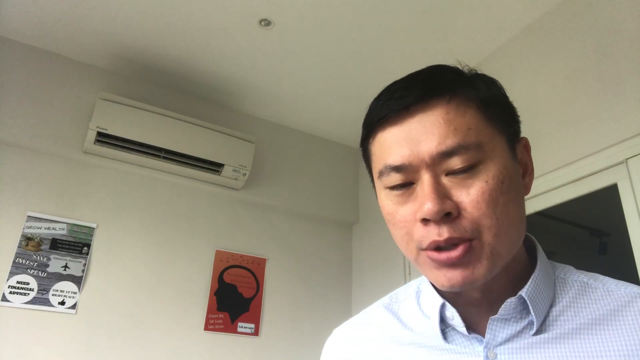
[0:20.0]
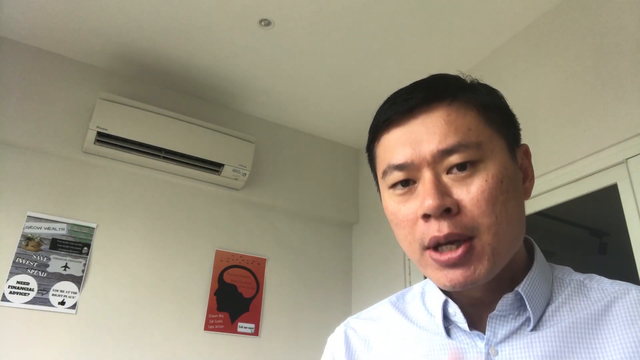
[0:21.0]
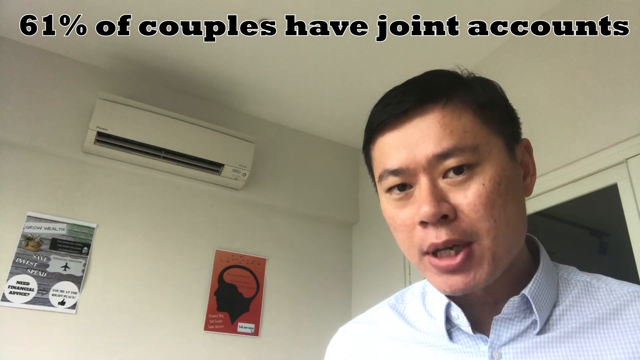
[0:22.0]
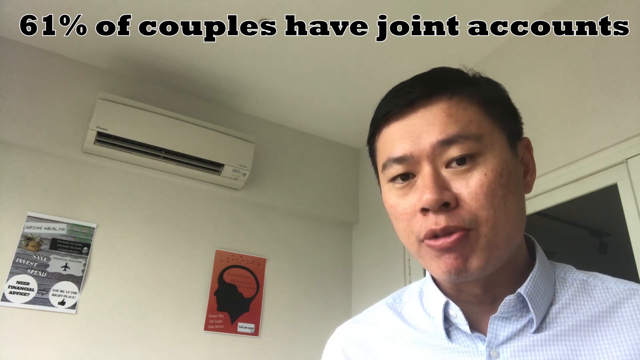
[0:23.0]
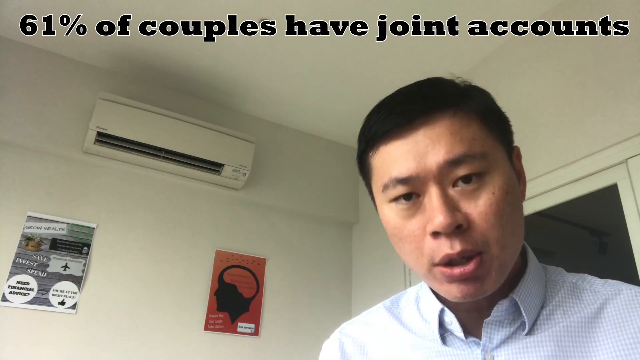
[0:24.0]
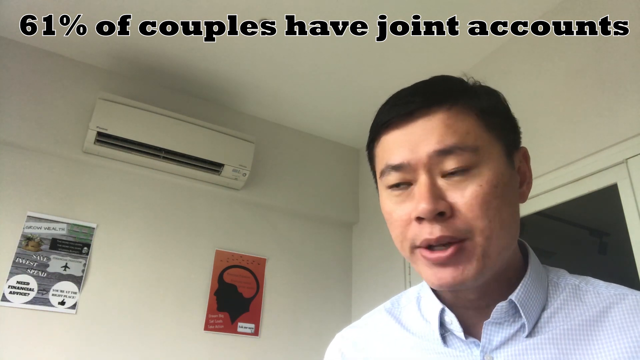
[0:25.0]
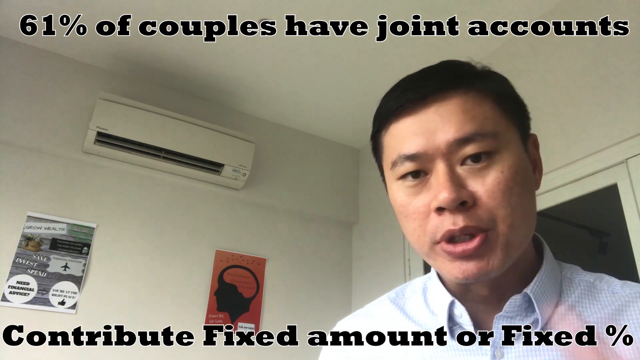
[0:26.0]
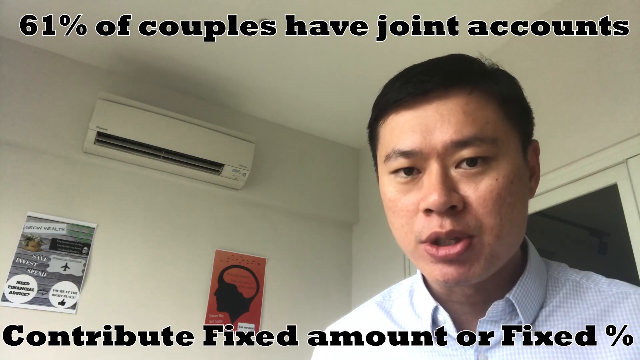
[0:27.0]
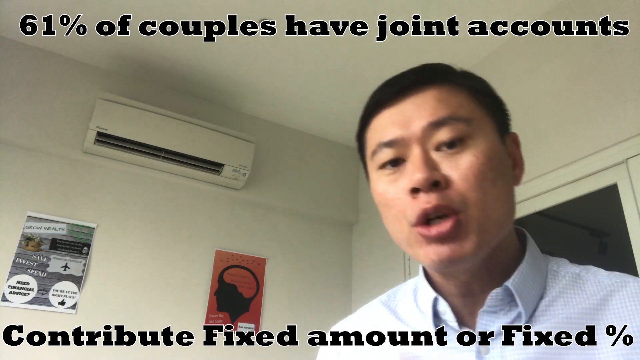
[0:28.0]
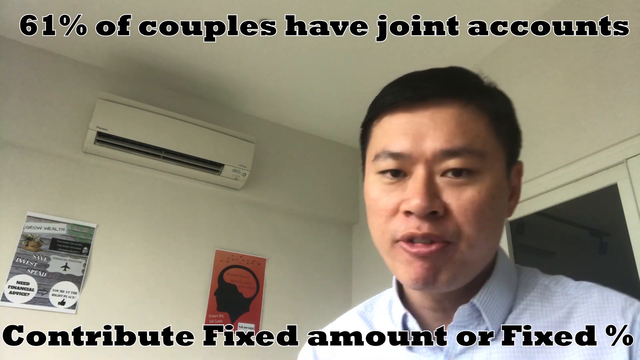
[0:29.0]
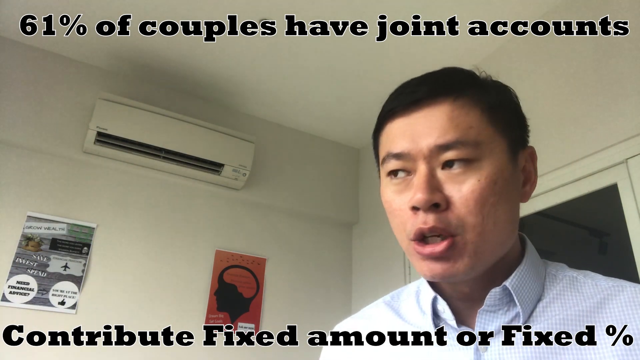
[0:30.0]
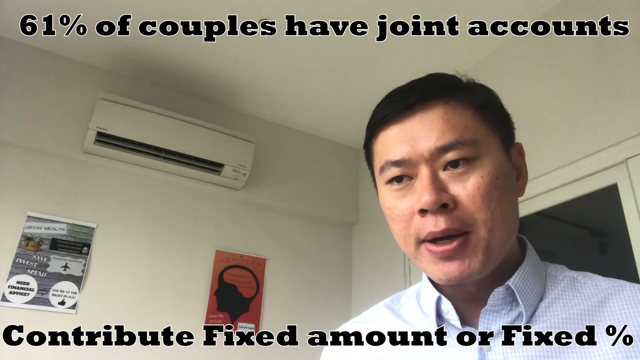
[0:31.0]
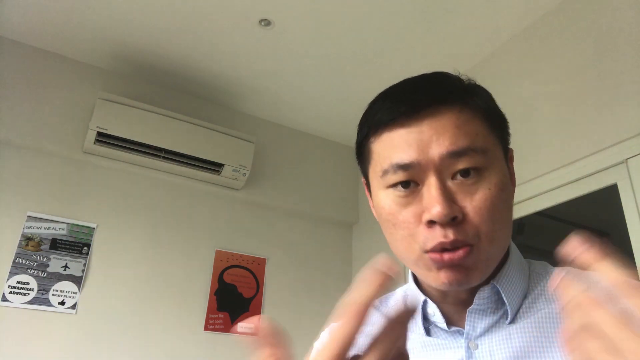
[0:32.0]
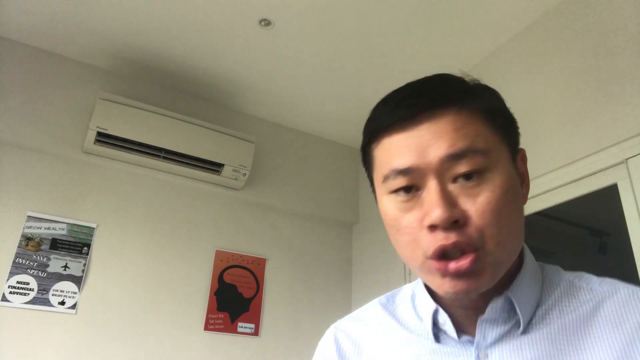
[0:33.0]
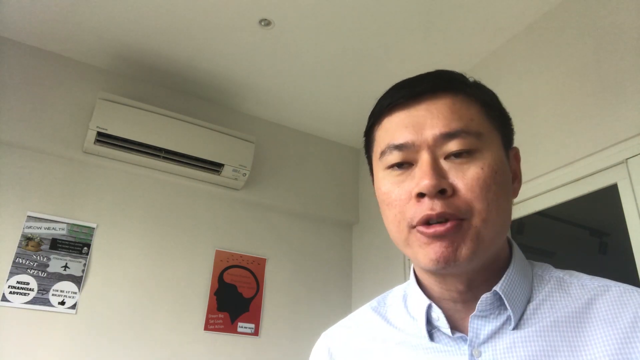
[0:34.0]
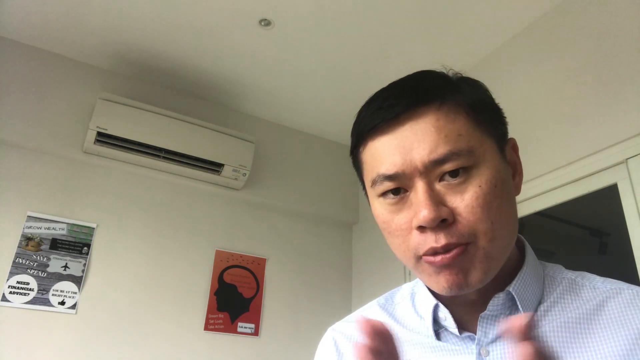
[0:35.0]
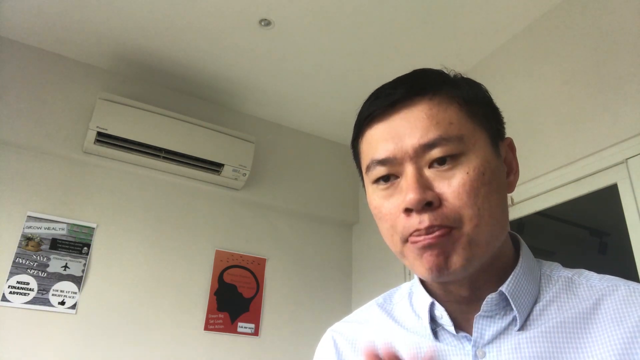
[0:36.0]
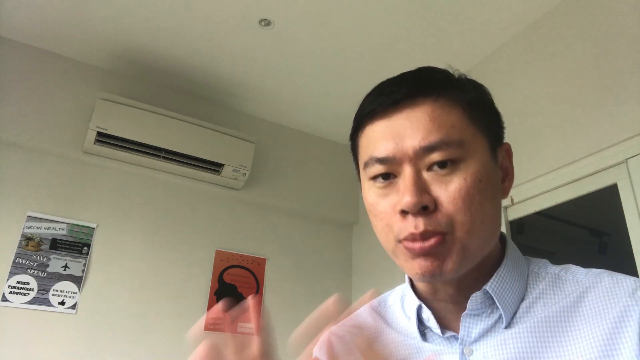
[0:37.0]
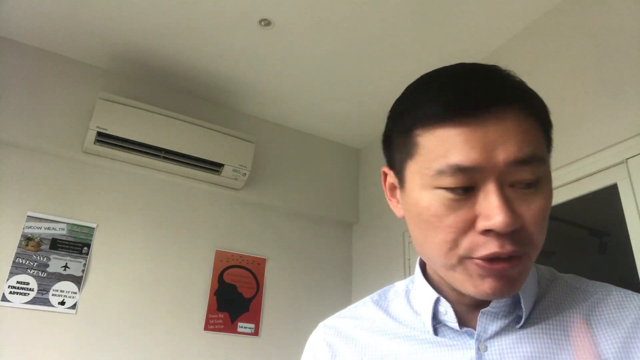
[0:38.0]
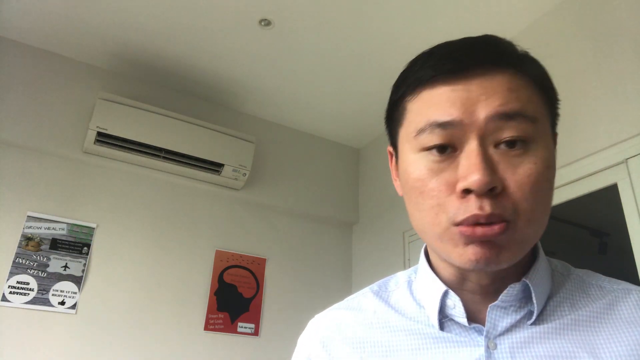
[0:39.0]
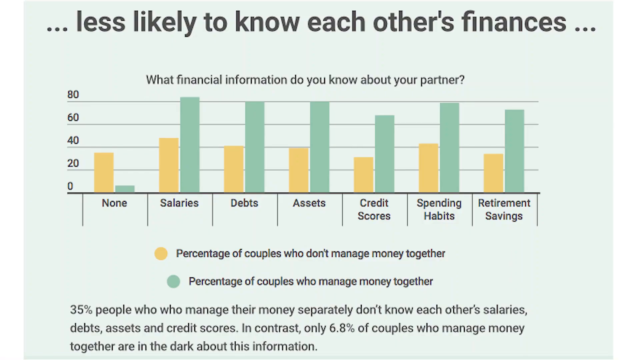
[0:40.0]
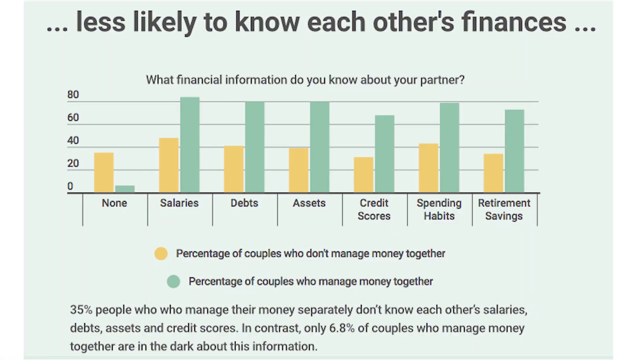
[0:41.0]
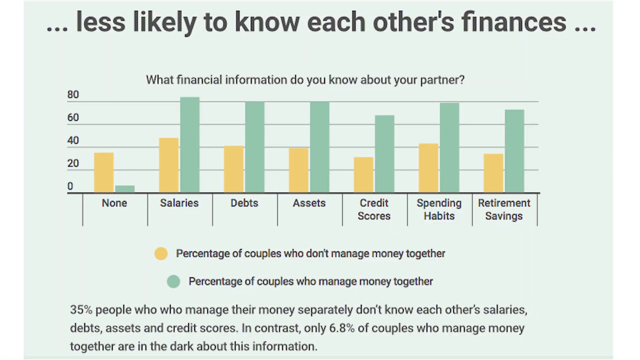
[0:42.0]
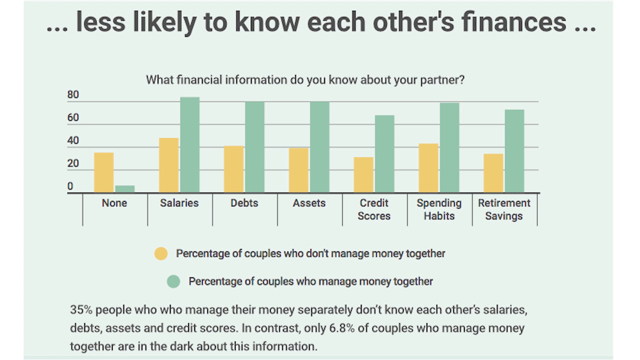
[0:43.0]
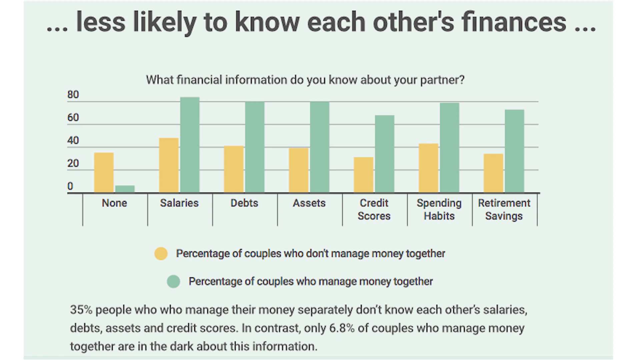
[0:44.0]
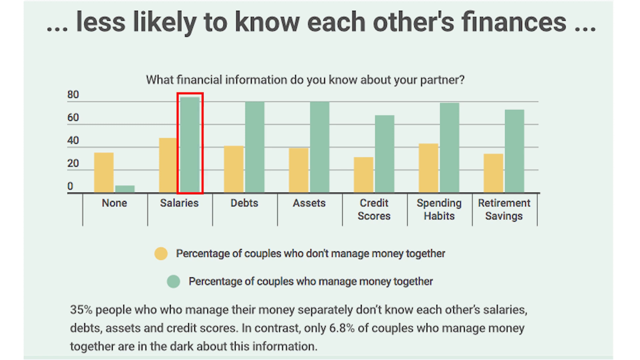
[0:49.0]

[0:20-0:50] The camera is almost down low, looking up, so the man kind of looks down at the viewer. At the top, bold text with a faint white outline reads "61% of the couples have joint accounts". He speaks, glancing off to the right a little and back as he talks. Along the very bottom edge, text reads "contribute fixed amount or fixed %", with the percent symbol used. He is kind of jerking and moving in his seat, a little jittery. He uses both hands in front of him, kind of curled over and projected toward the viewer as he talks, then moves around again, putting his hands together and slapping them. He then seems to say "one second" and looks up to the side. A question appears: "what financial information do you know about your partner", with different categories including salaries, debts, assets and a few others. On the left are increments of 20 up to 80. Green represents the percentage of couples who manage money and yellow those who do not, with a little tagline underneath. A red border is then put around the green bar for salaries.